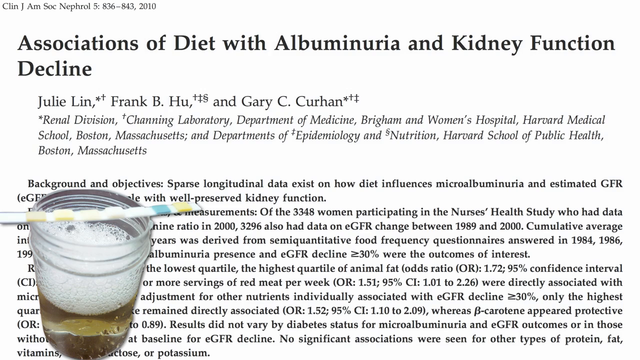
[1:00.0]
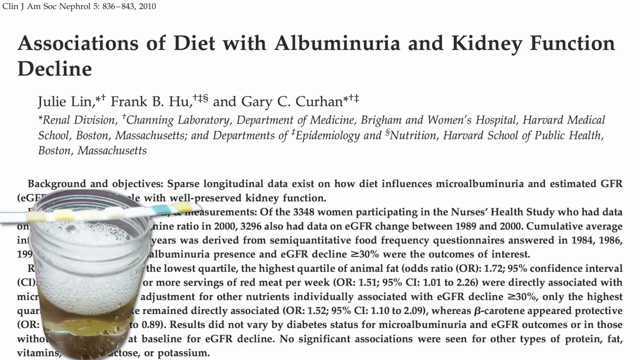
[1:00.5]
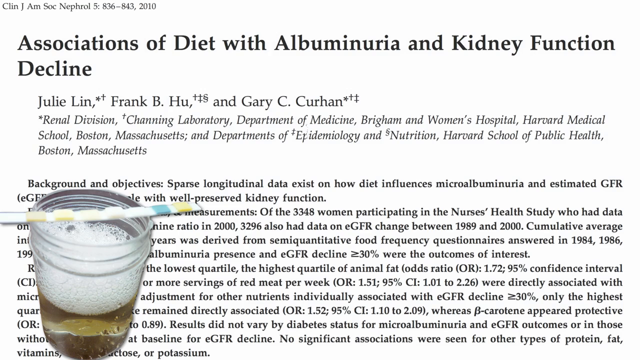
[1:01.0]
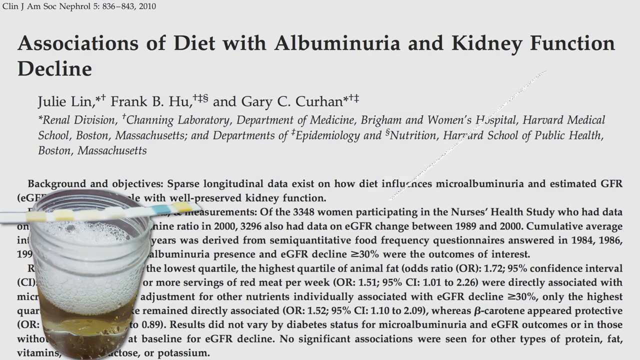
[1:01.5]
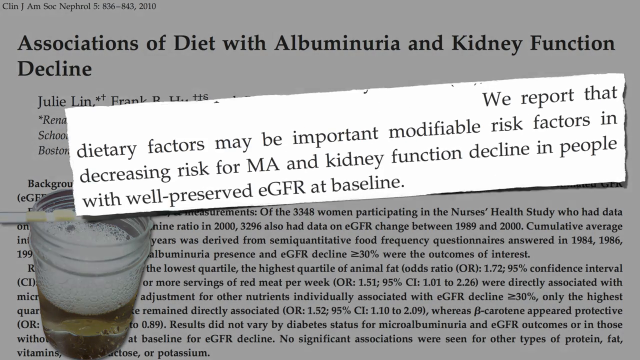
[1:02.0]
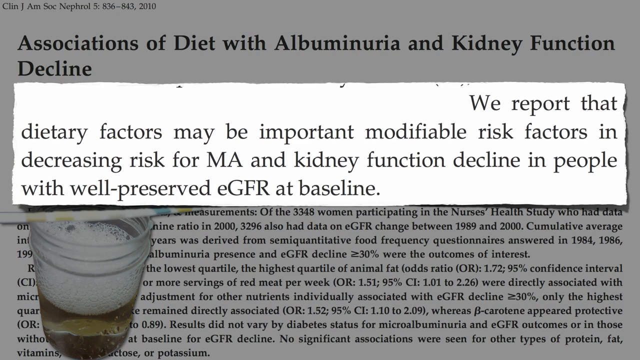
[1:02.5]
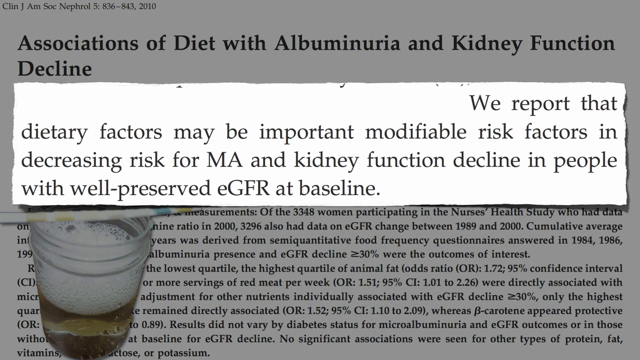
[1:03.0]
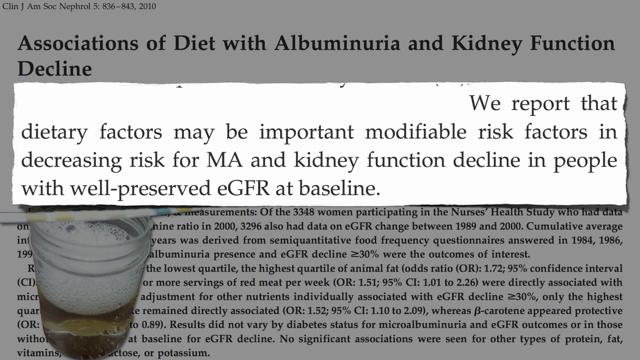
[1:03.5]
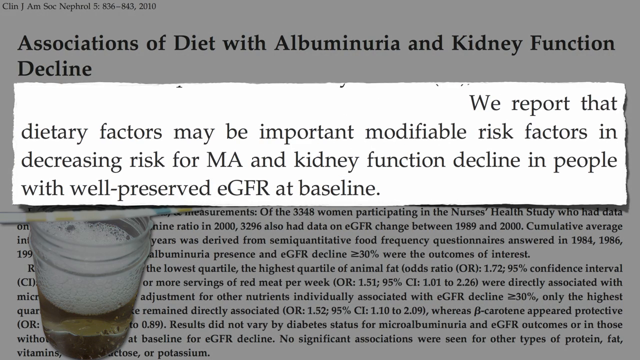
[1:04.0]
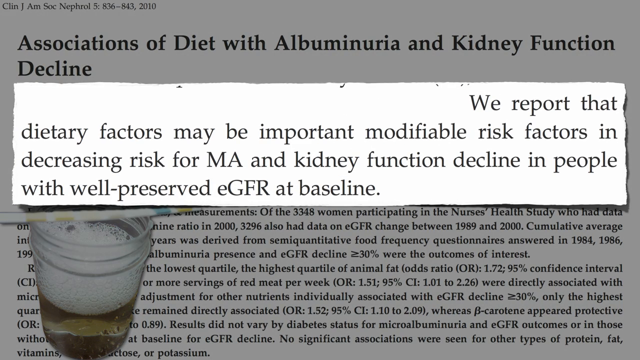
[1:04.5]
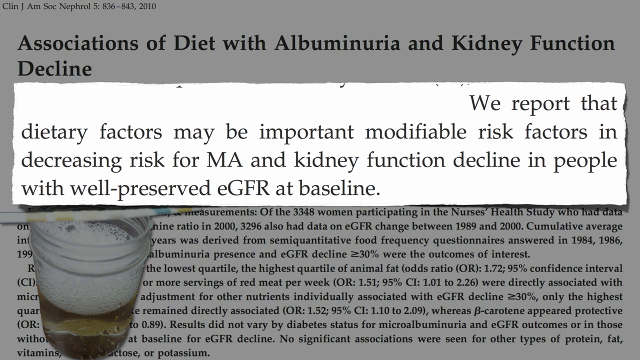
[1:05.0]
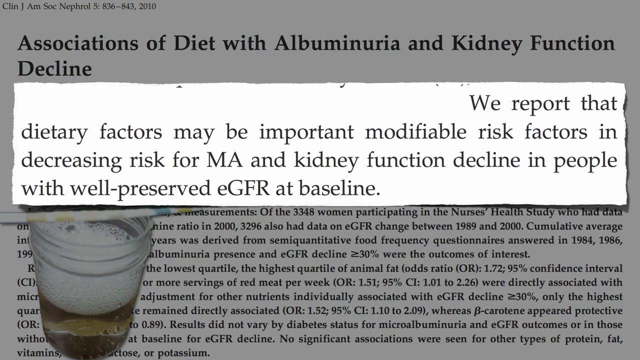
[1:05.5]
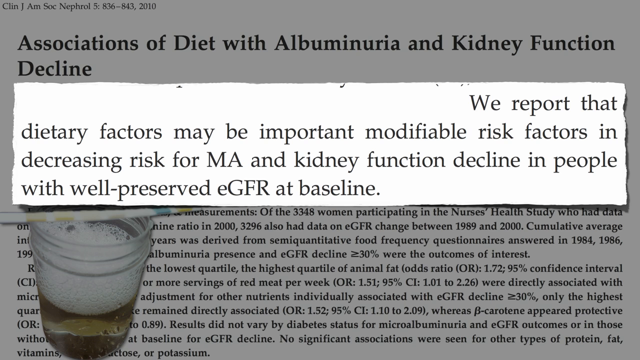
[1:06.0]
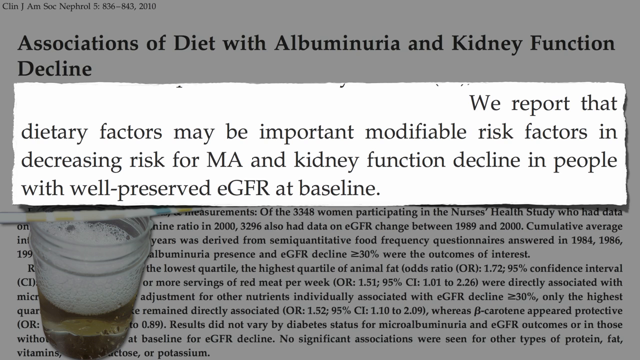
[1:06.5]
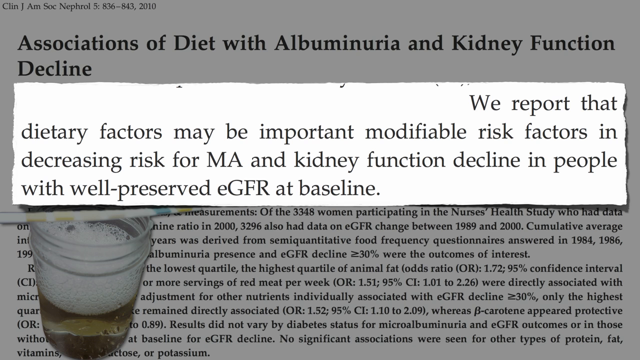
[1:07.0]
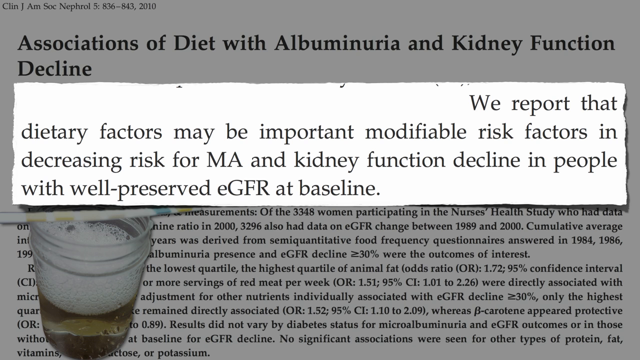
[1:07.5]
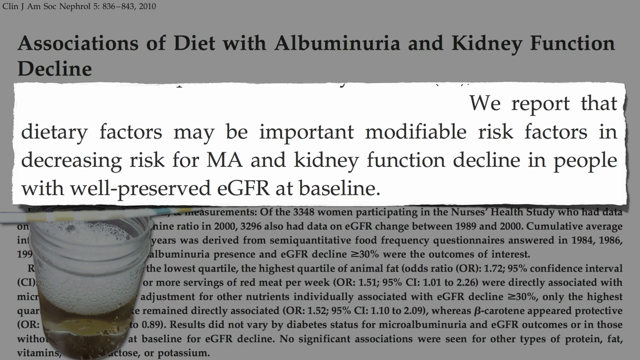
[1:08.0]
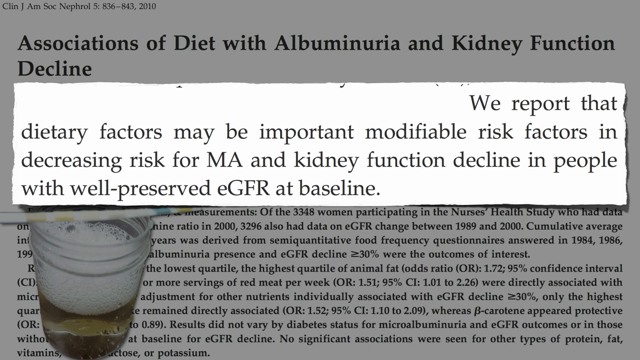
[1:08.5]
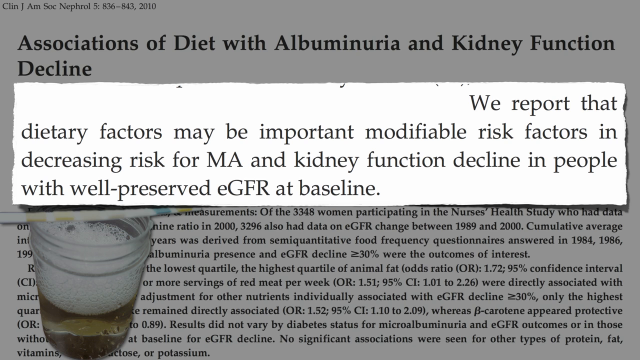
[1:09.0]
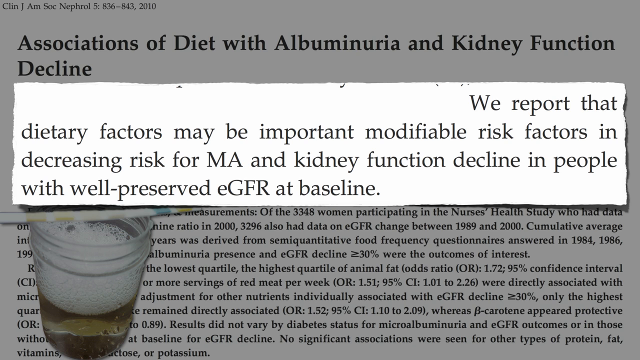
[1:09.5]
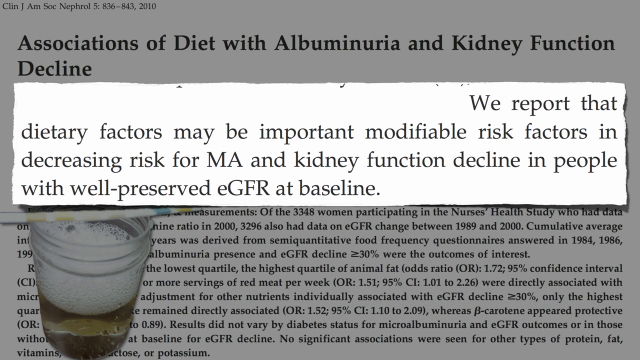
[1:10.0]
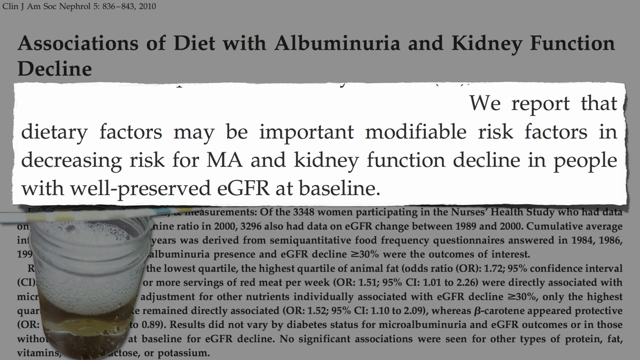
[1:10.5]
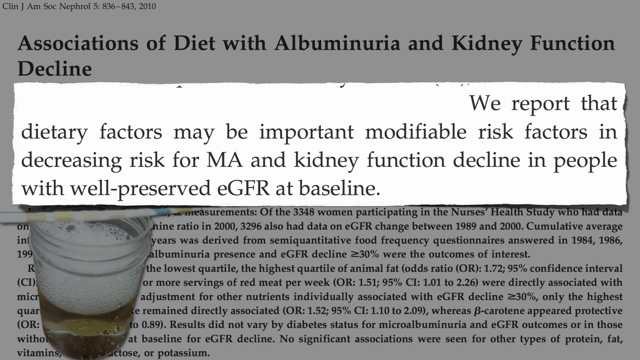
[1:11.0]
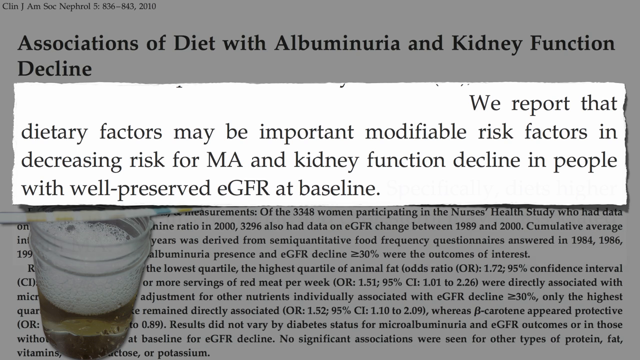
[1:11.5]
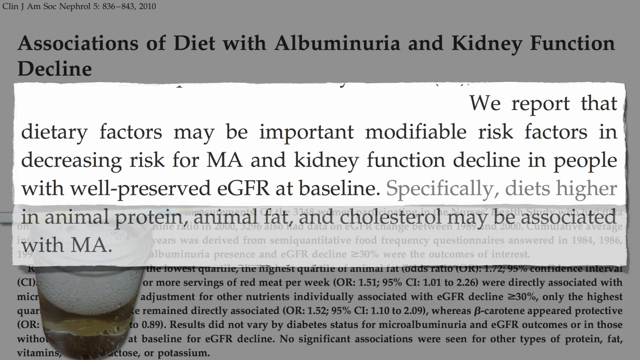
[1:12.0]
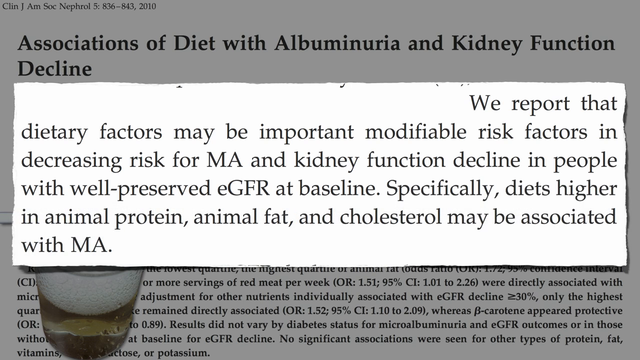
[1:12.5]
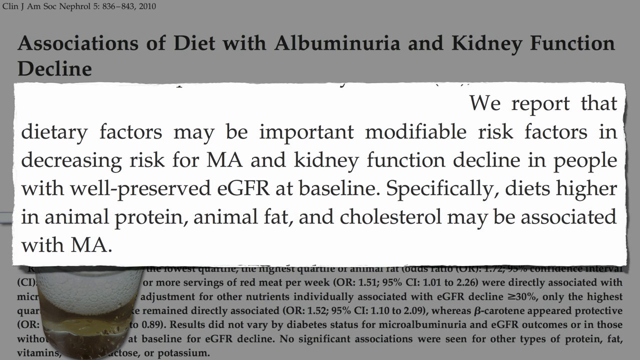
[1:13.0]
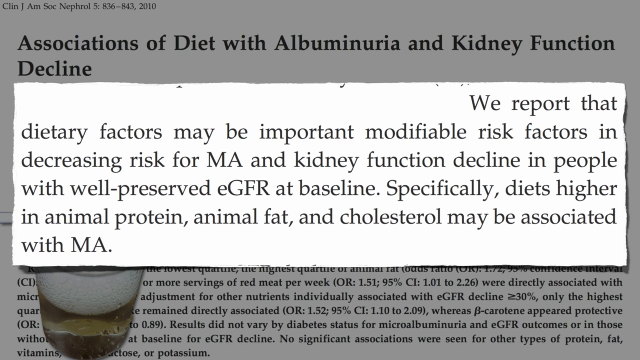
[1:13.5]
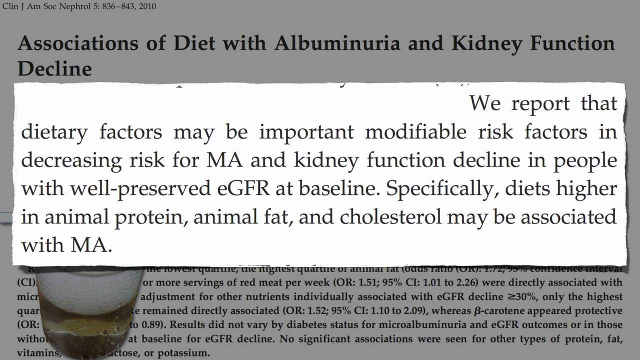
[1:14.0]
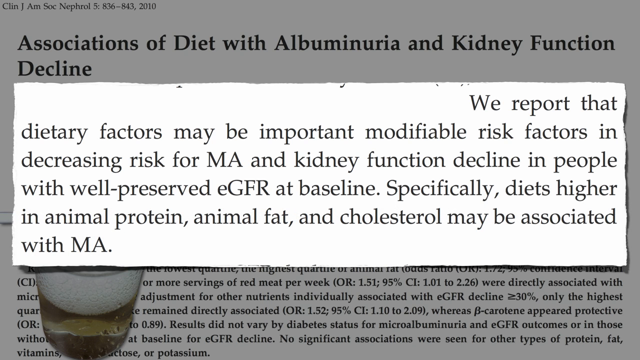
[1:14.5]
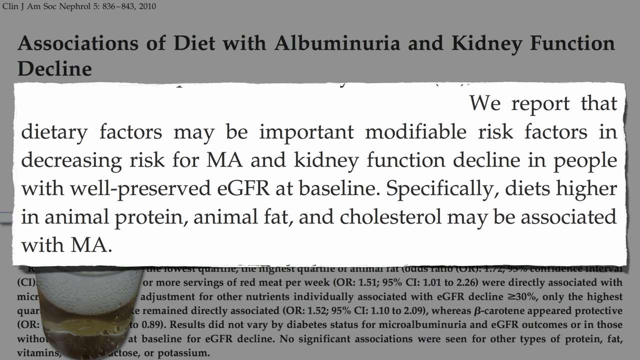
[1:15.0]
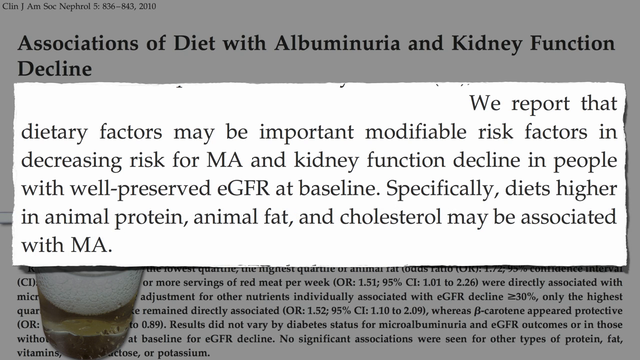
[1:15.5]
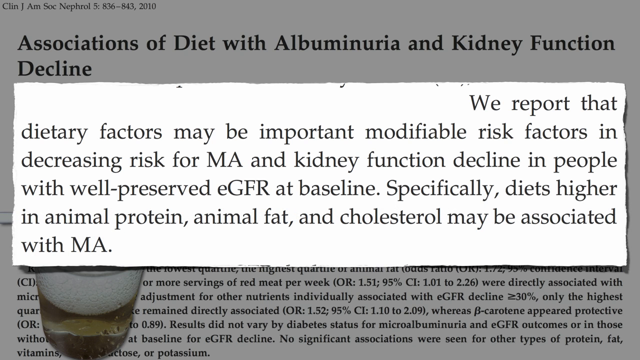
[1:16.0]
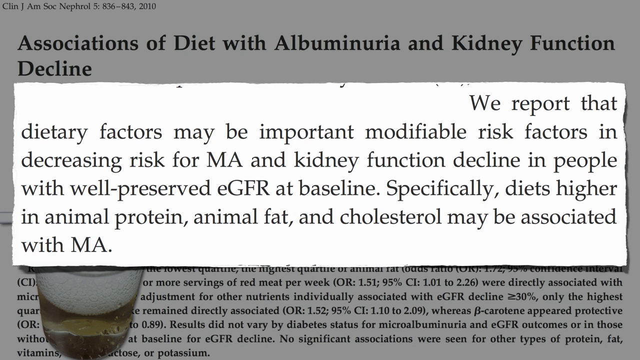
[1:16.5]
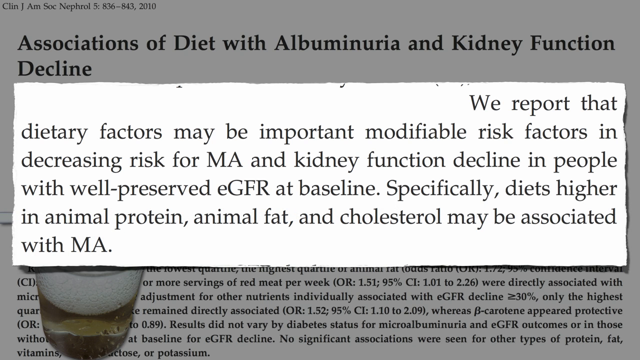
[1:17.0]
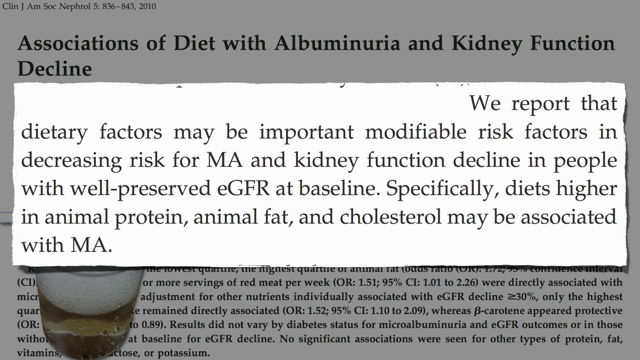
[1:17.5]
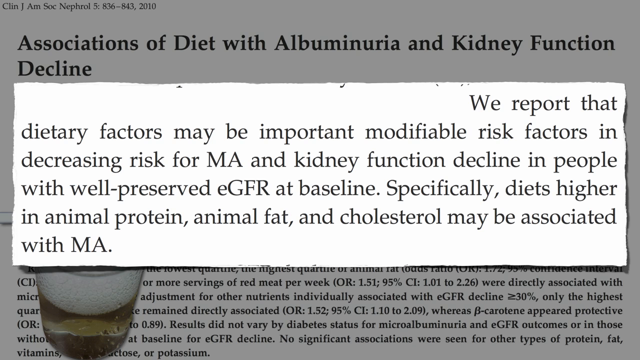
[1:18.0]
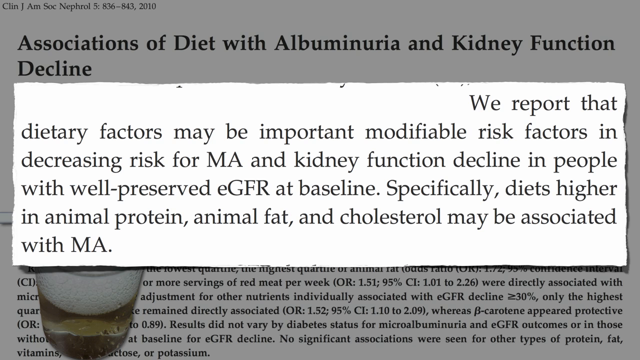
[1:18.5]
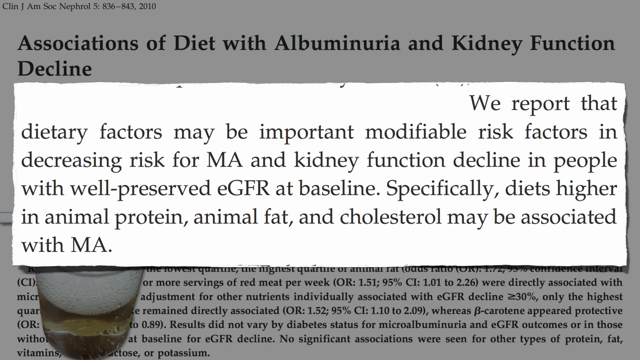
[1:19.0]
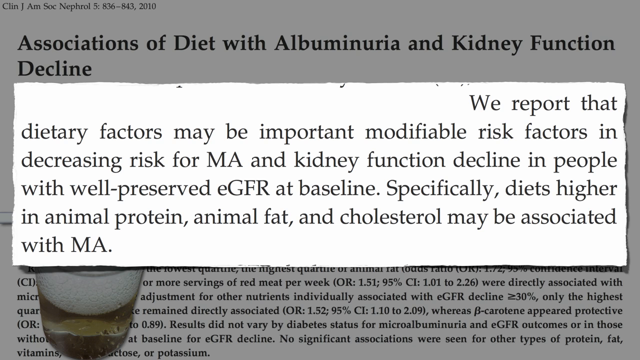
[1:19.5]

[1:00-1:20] Over the paper, a white pop-up box appears with borders that are not really straight, almost as if it were cut out. It reads "we report that dietary factors may be important modifiable risk factors in decreasing risk for MA and kidney function decline in people with well-preserved EGFR at baseline." More text is then added: "specifically diets higher in animal protein, animal fat and cholesterol may be associated with MA."